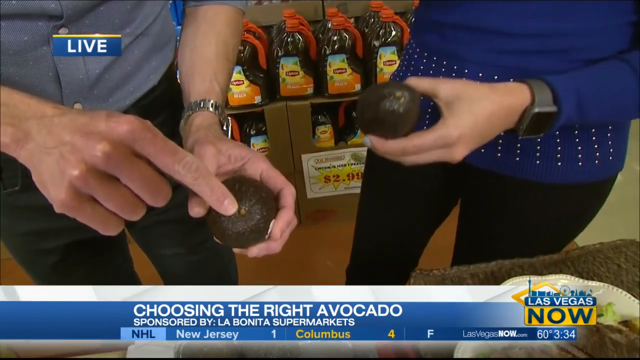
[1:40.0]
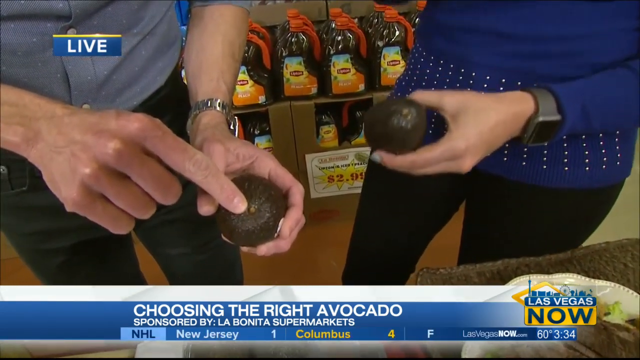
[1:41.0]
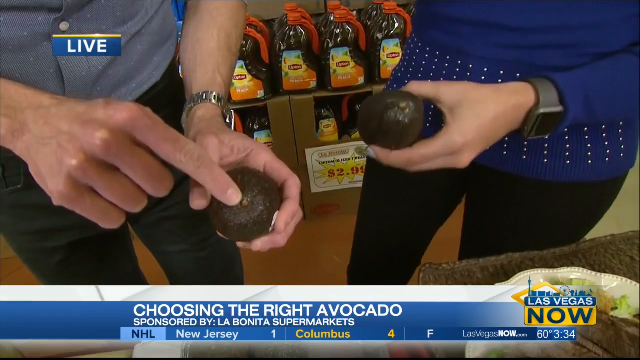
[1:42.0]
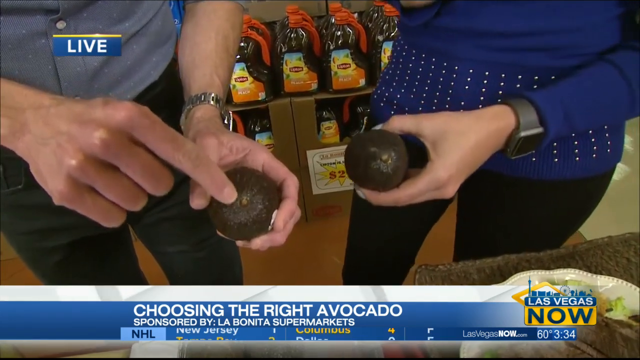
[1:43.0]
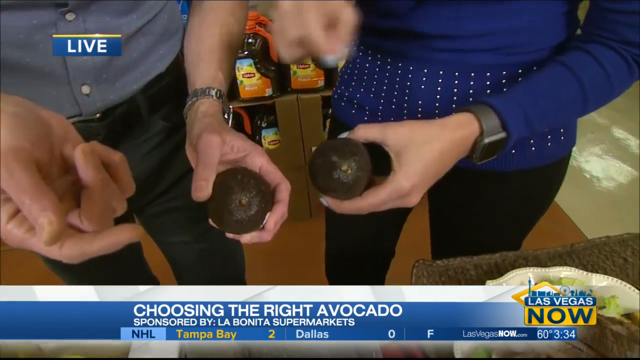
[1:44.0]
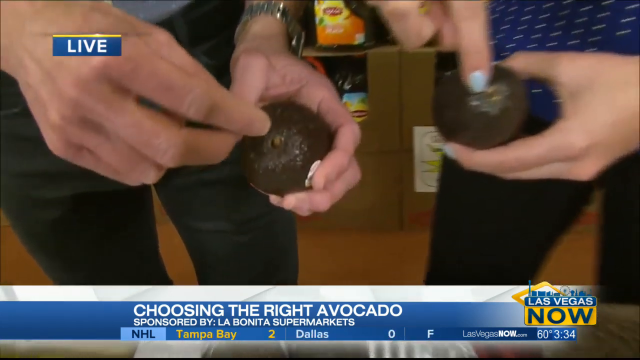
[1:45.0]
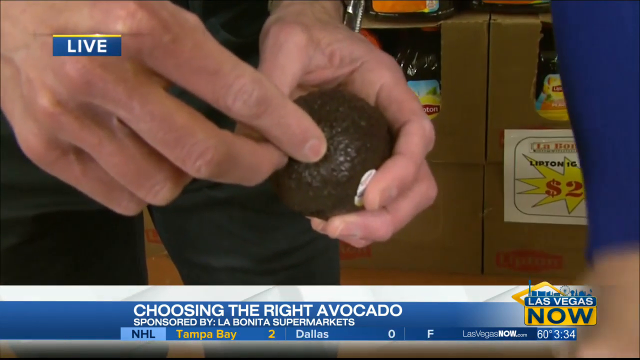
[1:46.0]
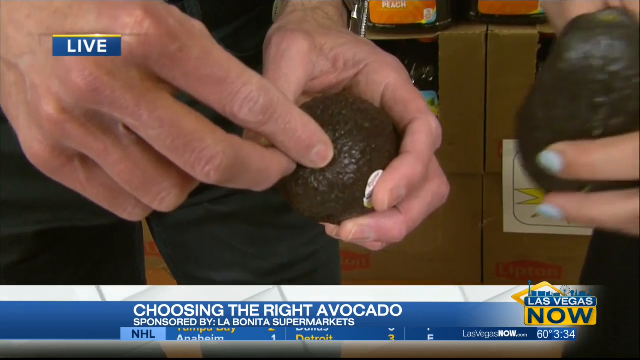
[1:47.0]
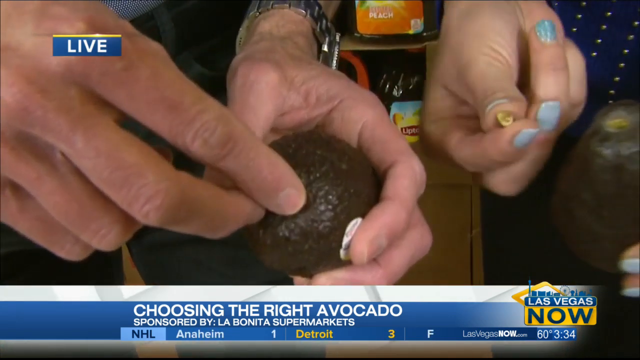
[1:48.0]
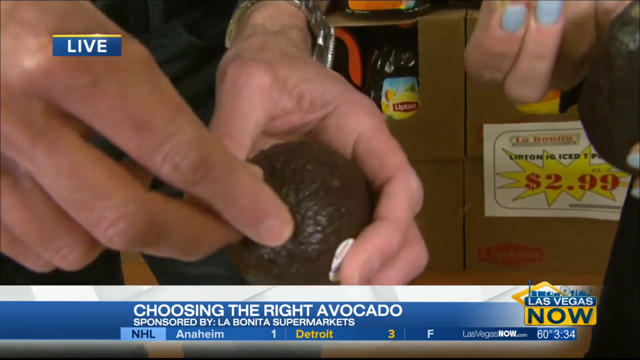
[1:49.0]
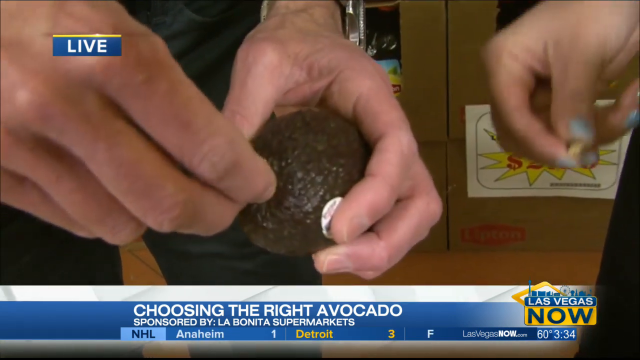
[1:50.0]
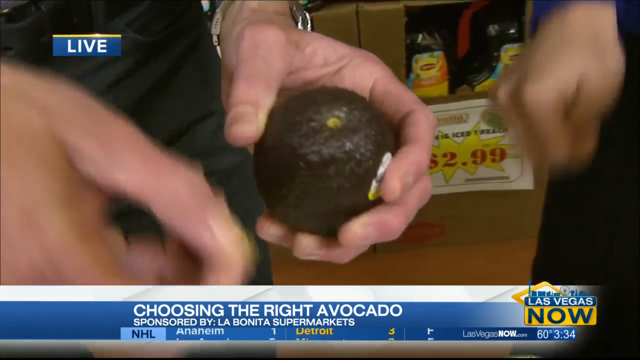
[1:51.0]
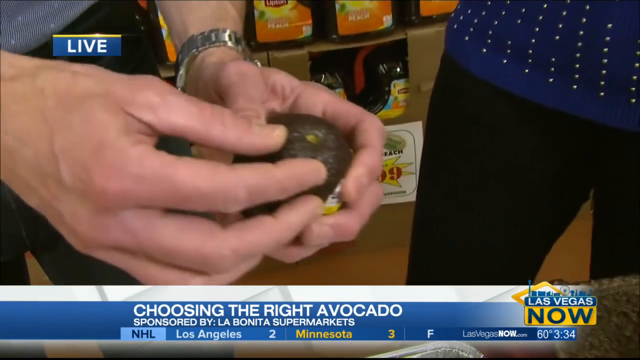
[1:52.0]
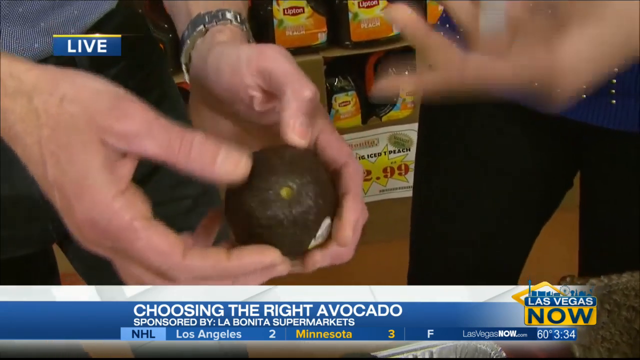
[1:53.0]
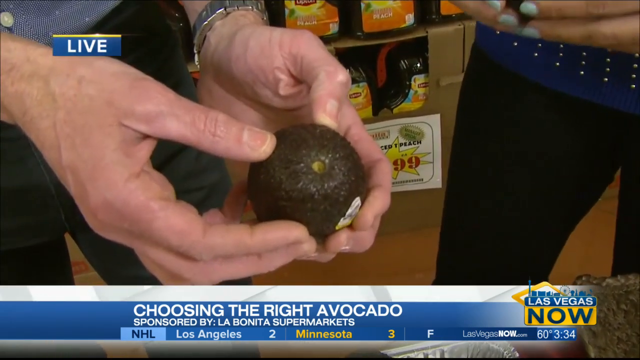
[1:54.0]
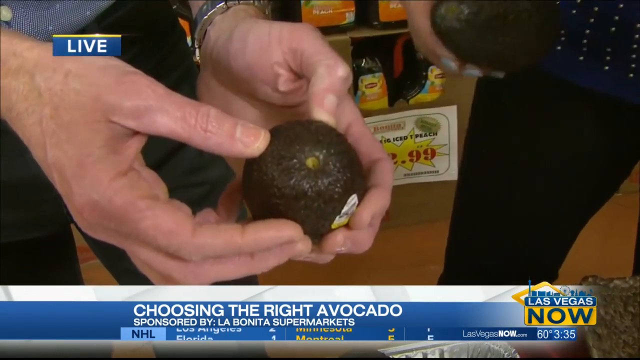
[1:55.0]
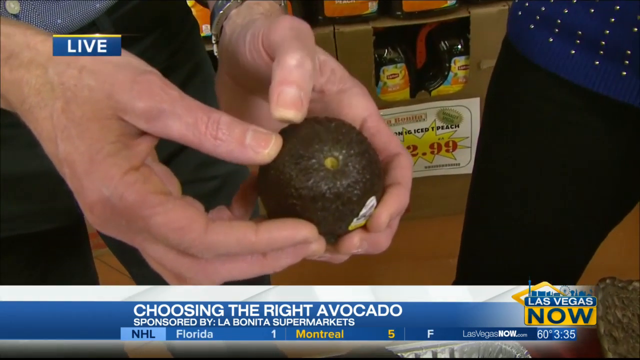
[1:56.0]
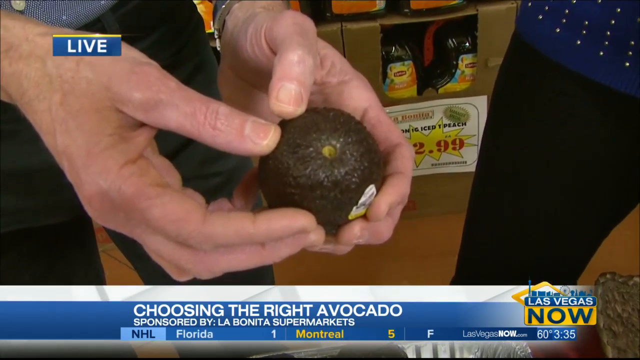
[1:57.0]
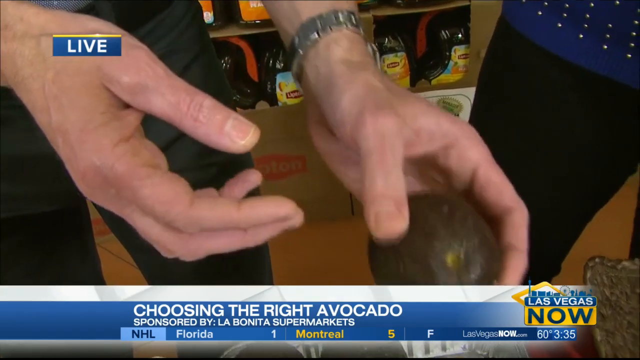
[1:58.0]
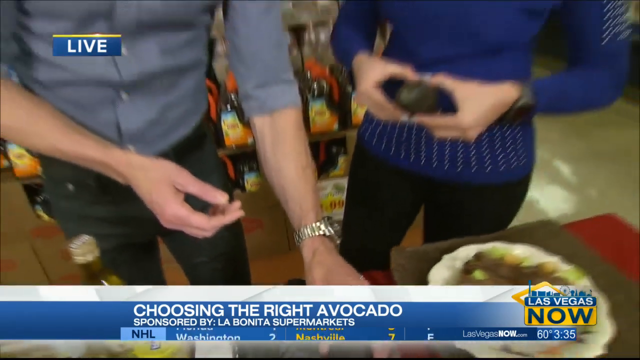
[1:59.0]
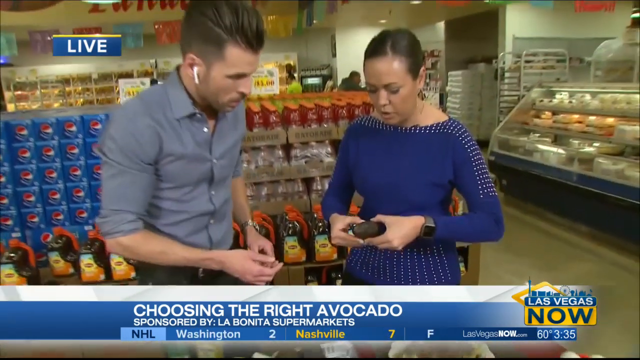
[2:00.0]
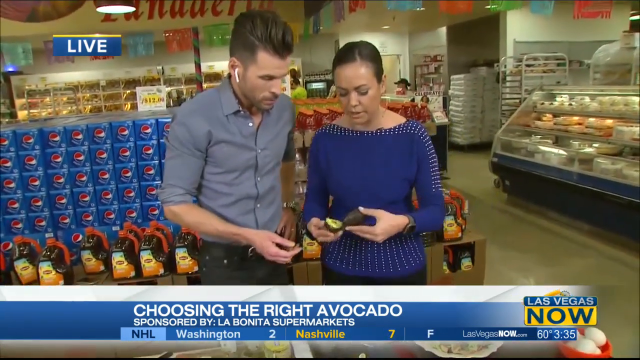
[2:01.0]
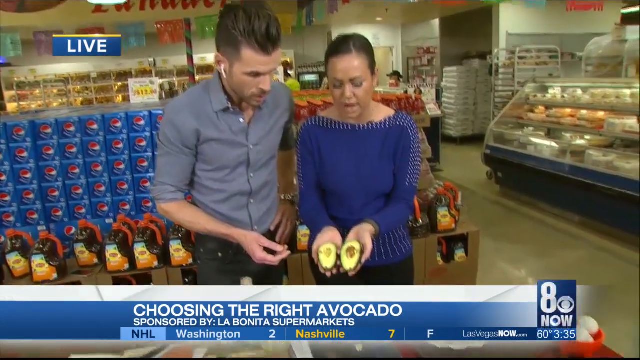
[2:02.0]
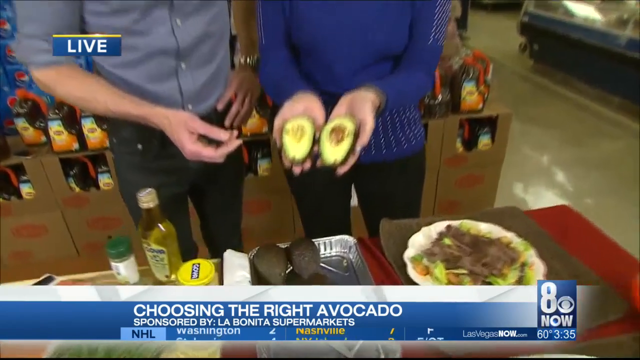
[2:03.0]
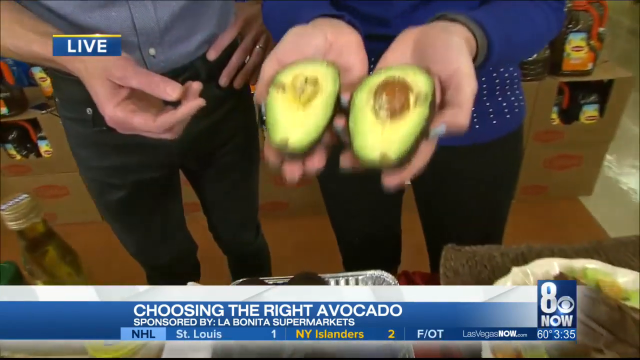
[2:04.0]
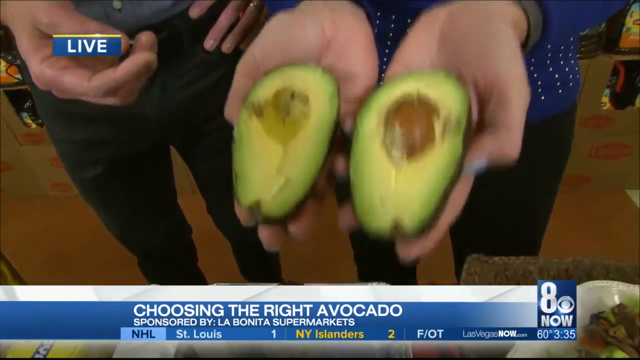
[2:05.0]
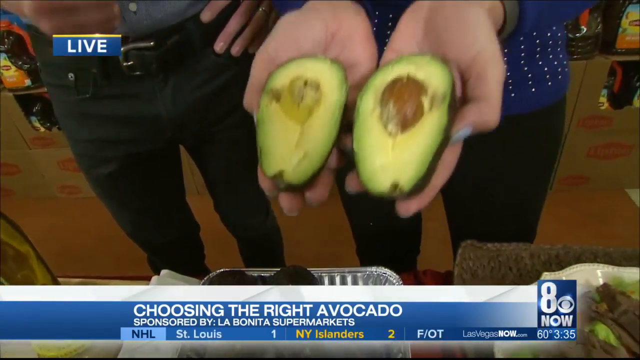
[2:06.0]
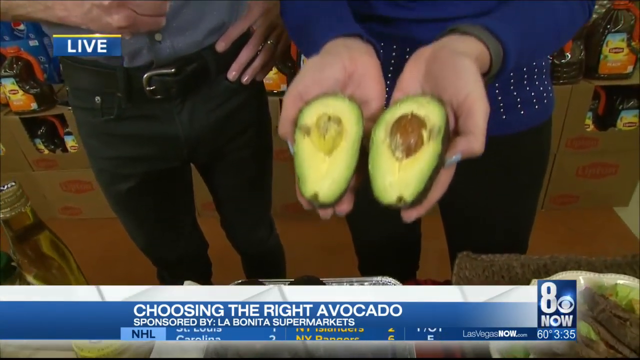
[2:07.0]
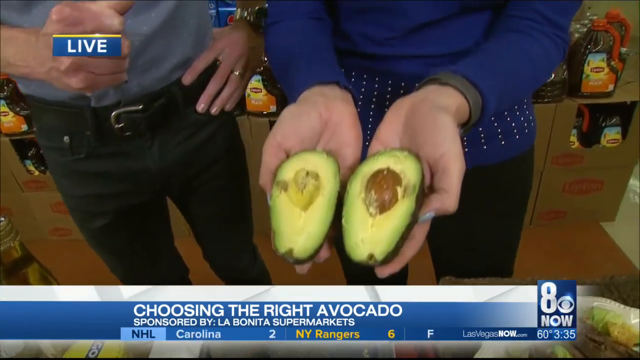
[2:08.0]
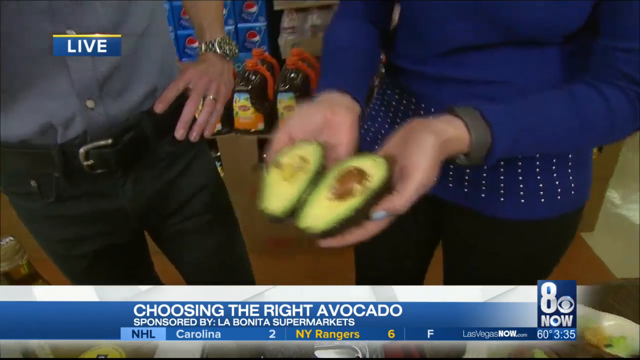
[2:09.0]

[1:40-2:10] The screen says "live" and "choosing right avocado sponsored by LA Bonita Supermarkets"; the channel is apparently Las Vegas now. Two people handle avocados, with Limton tea visible in the background. They point at an avocado and try to pull the seed, or pit, out of it, and they pop the pit out. The lady points, telling the man to do something; he puts his avocado down and they look at hers. She splits it open without a knife into two perfectly centered halves. They appear to be in a grocery store.